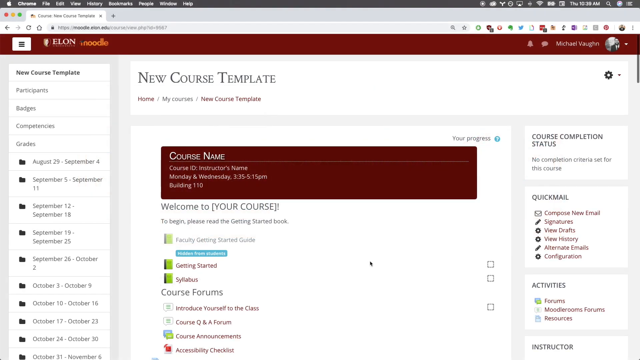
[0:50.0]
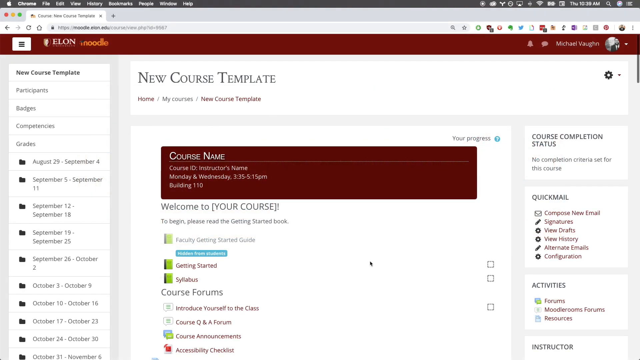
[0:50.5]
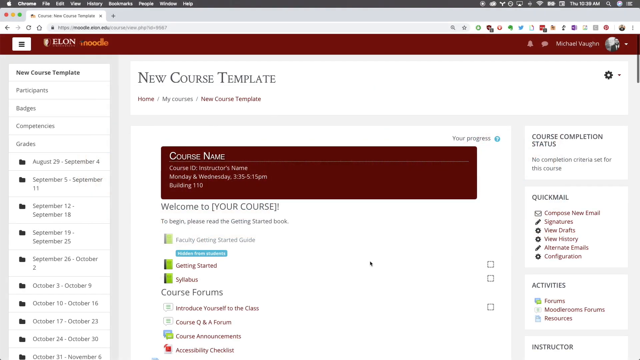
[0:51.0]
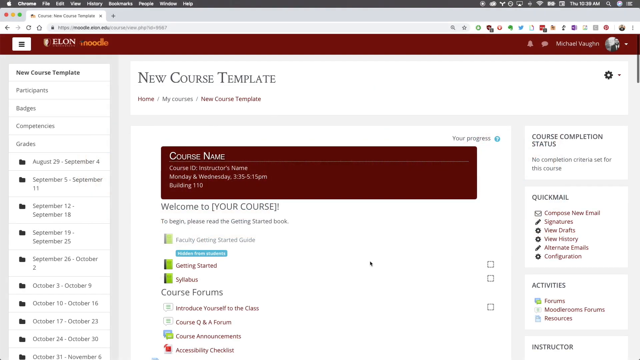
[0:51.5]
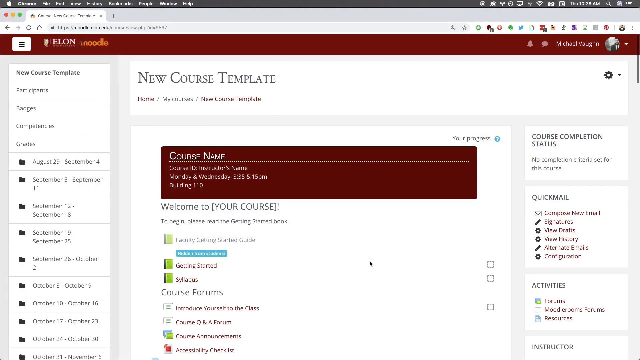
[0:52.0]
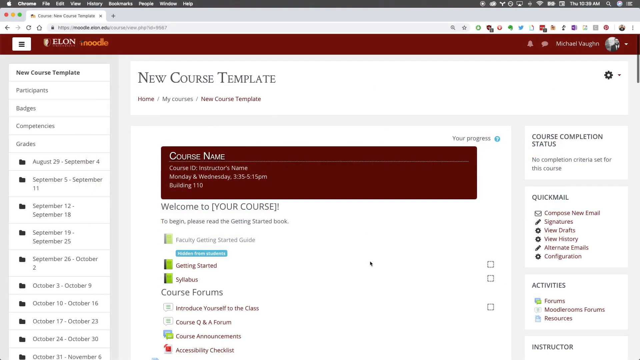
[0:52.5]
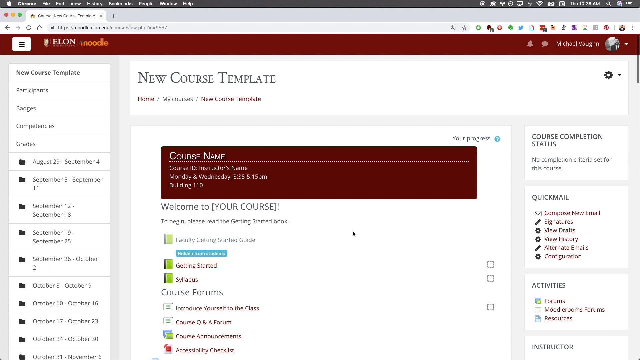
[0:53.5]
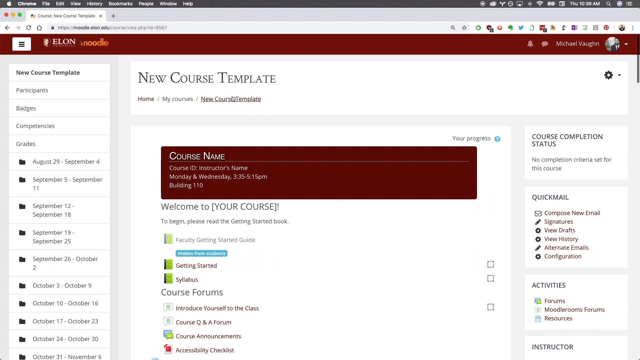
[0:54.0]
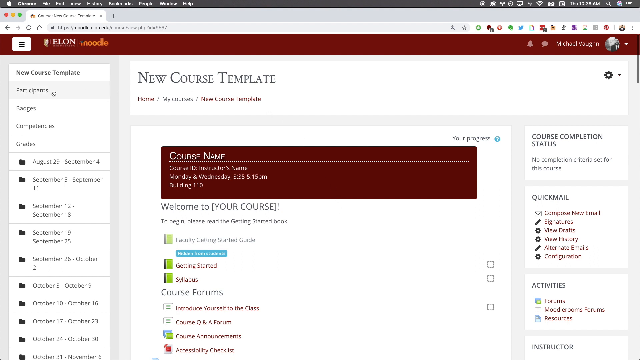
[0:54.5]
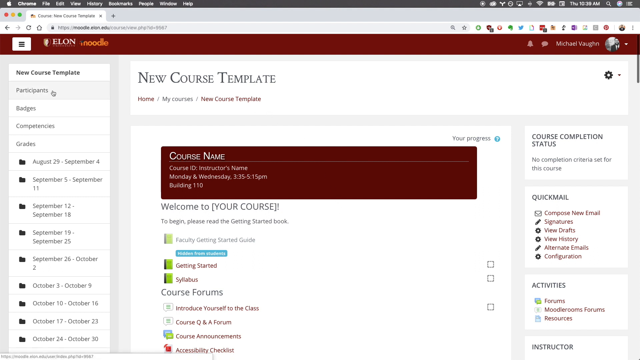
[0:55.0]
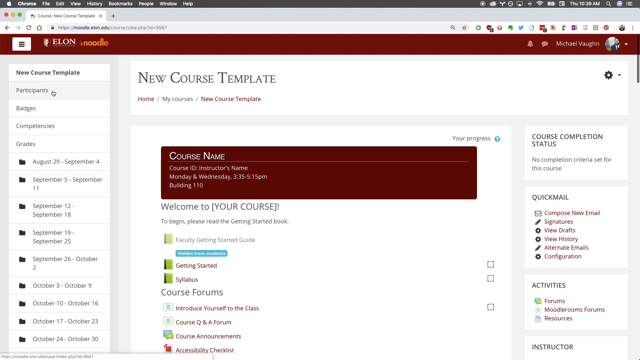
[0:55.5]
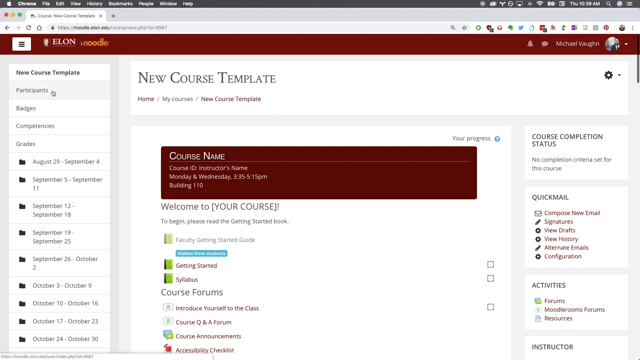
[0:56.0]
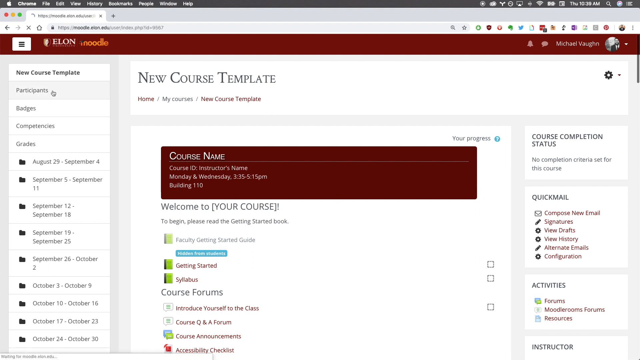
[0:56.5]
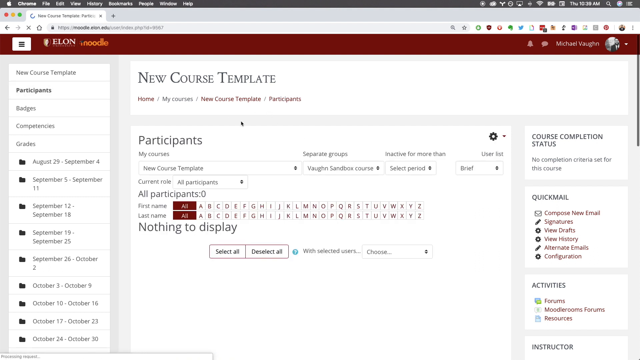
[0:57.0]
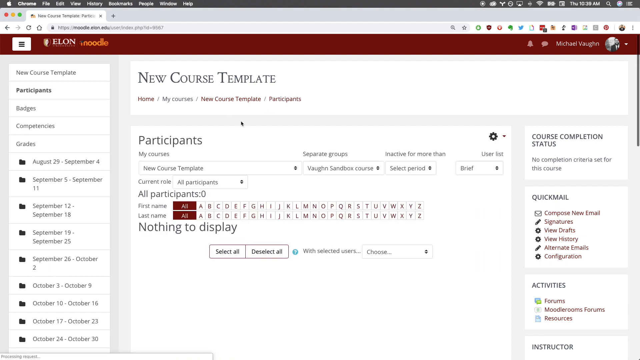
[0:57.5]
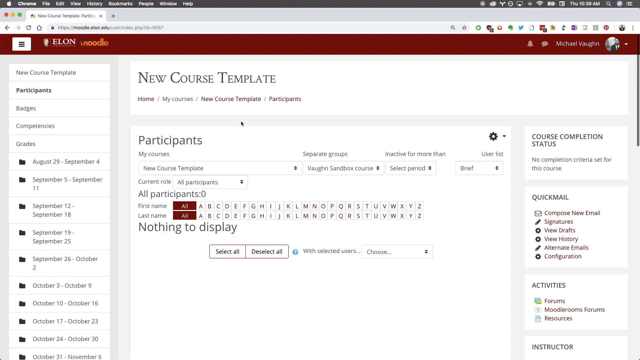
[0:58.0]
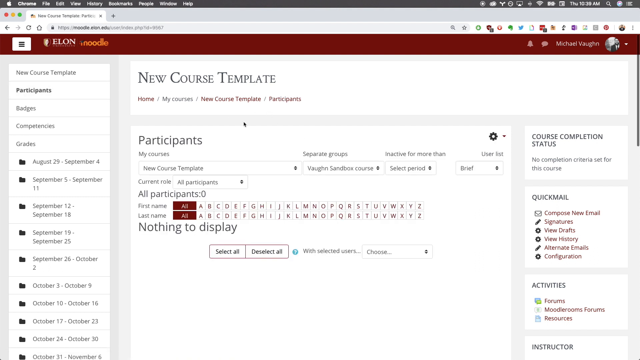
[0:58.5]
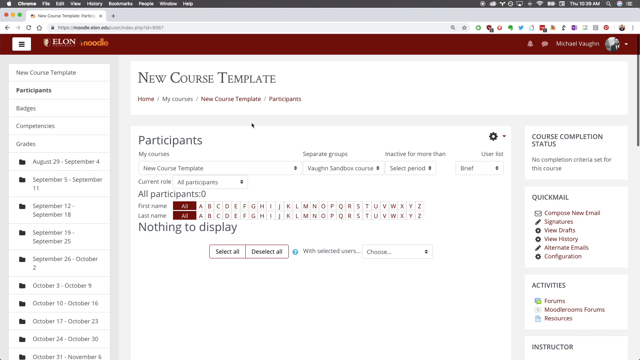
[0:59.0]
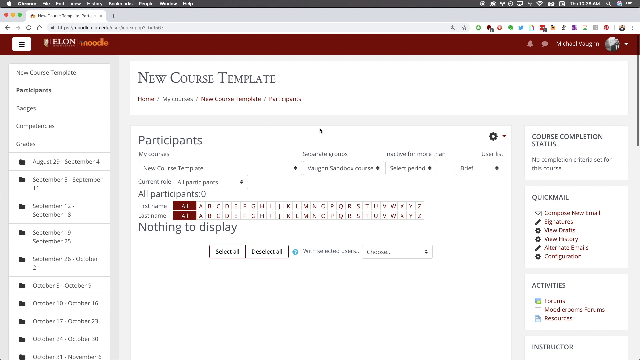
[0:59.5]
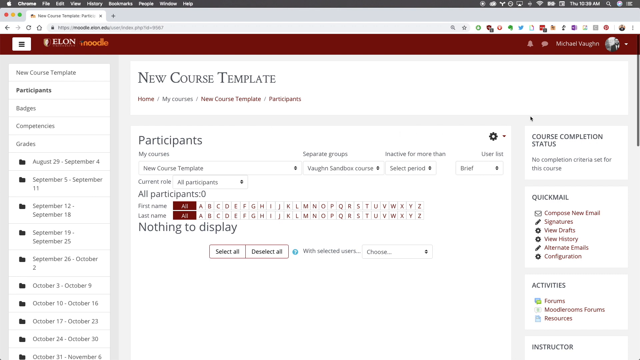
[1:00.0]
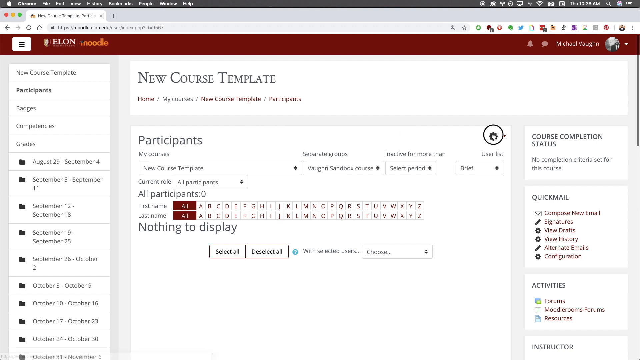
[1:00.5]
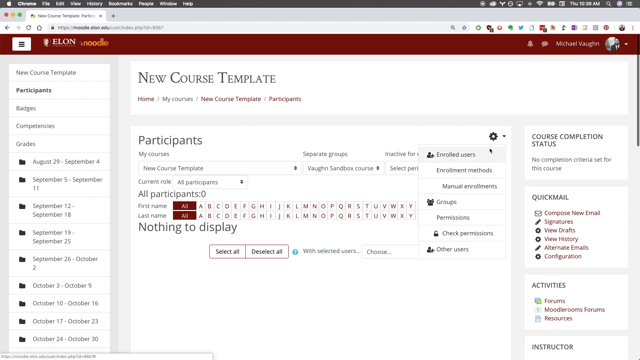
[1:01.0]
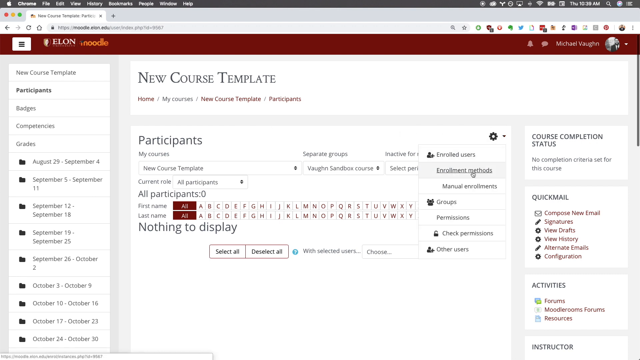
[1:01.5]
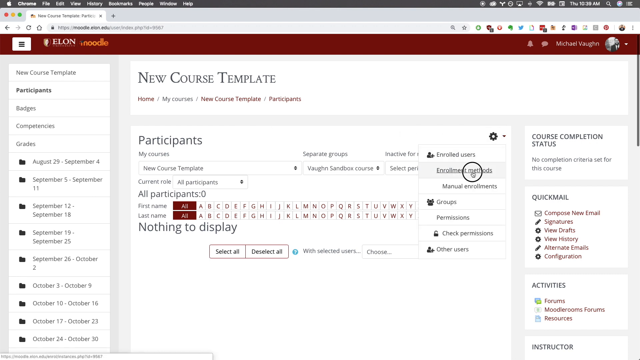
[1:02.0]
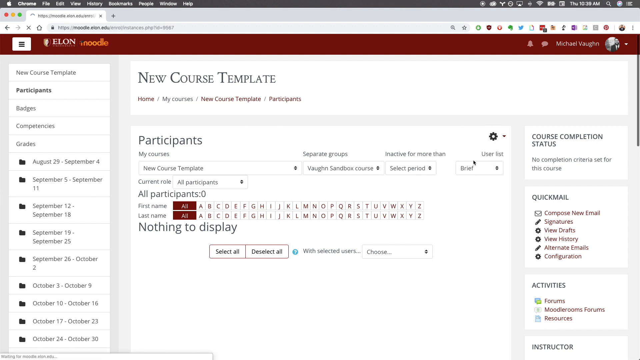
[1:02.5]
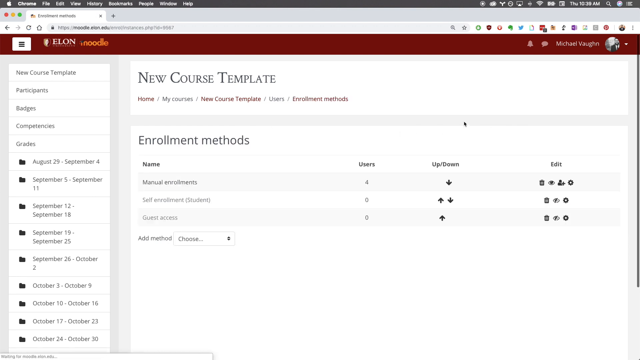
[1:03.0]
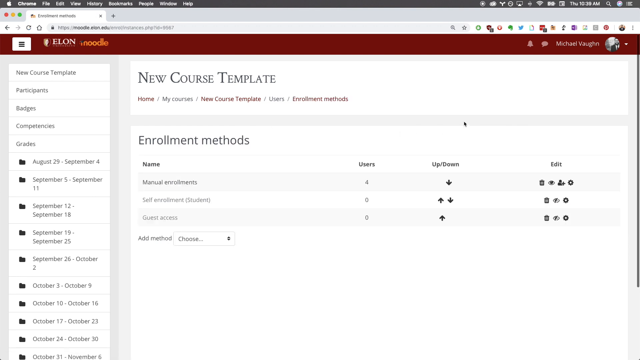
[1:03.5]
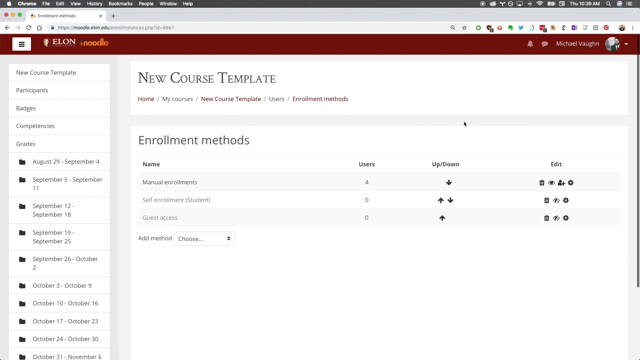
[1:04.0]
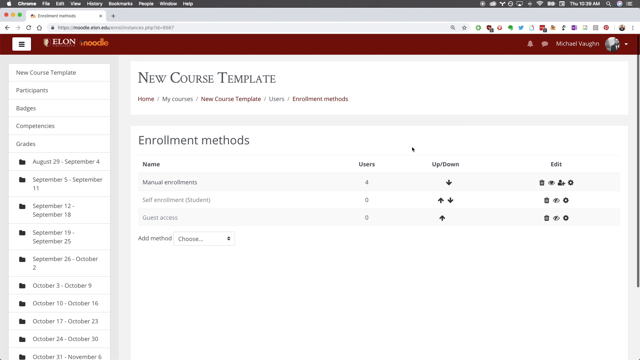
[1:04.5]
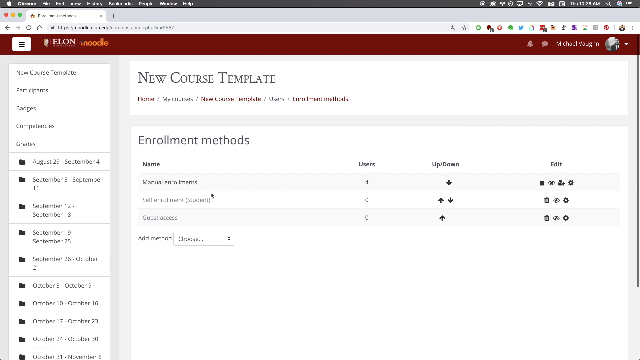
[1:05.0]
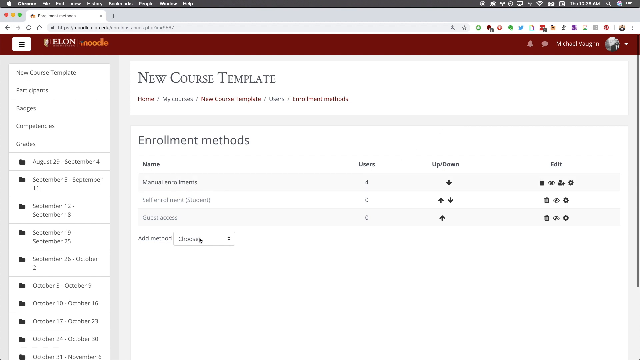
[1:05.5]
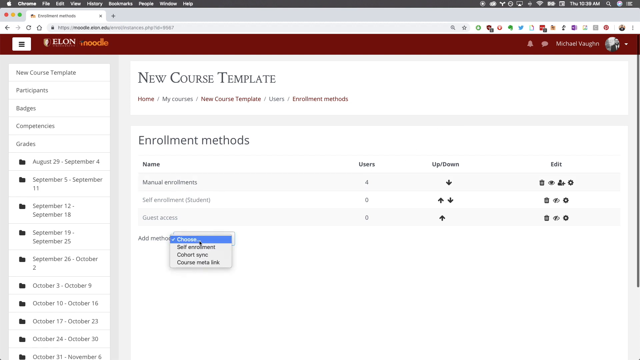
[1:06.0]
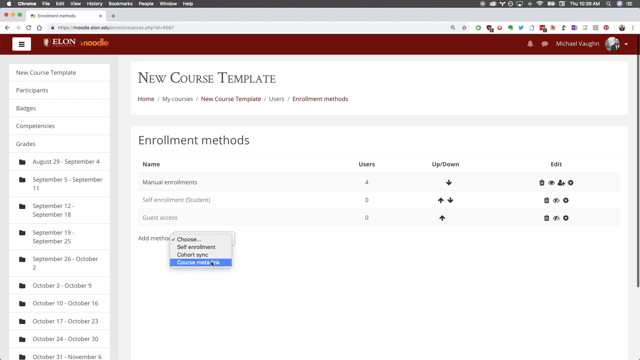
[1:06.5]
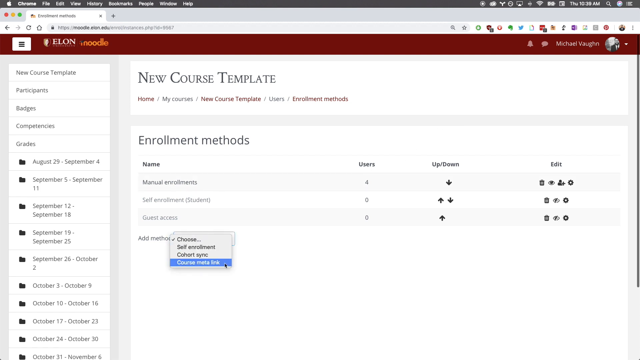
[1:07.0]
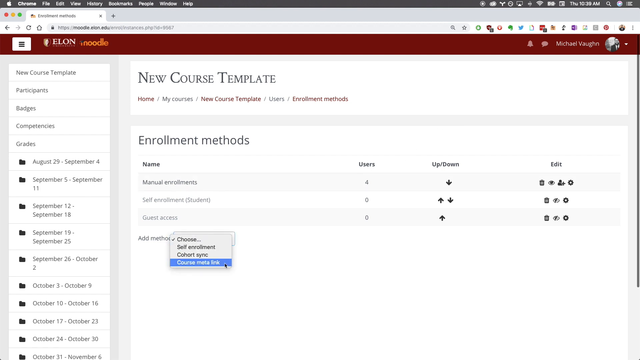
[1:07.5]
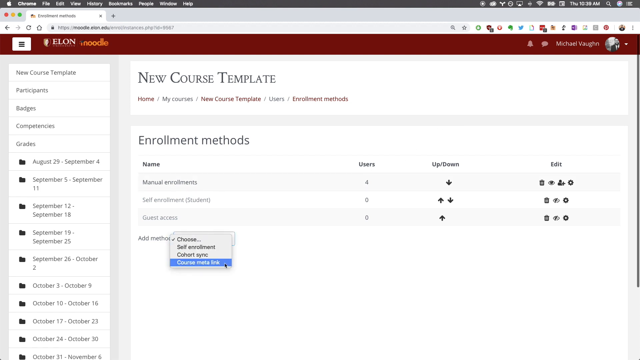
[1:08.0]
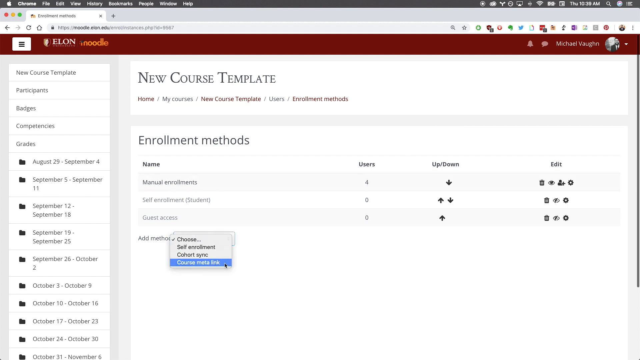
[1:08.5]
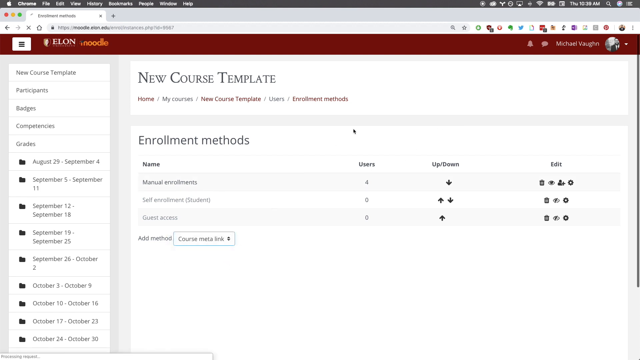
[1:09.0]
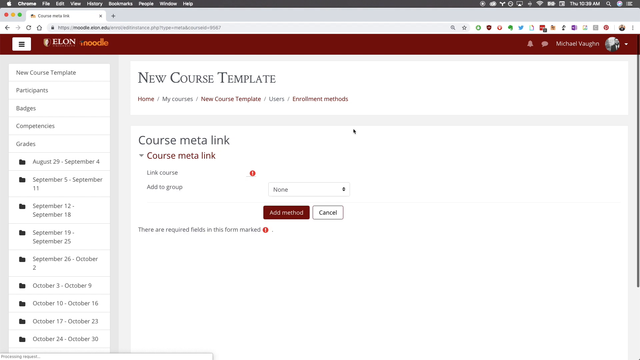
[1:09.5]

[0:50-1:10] A screen recording of a Chrome browser shows the Elon course website on a new course template page. The mouse cursor moves to the left-hand sidebar and clicks the "participants" button, which loads a new page saying "participants" in the main window, with an A to Z list for filtering by first name and last name and many drop-down and selection boxes. In the middle it says "nothing to display". The user then clicks the settings button in the top right-hand corner and clicks "enrolment methods" in the drop-down. This loads the enrolment methods page, which shows a table with the columns name, users, up, down and edit, and the rows manual enrolments, self enrolments, student and guest access. The user clicks "add method", clicks a "choose" drop-down menu, and then clicks "course meta link".